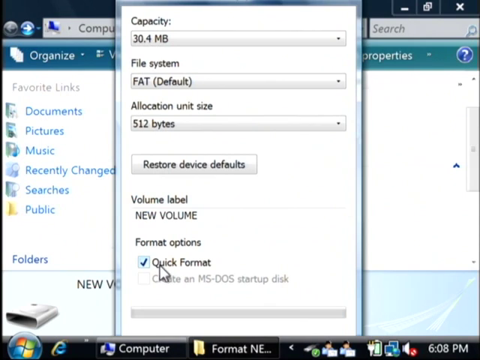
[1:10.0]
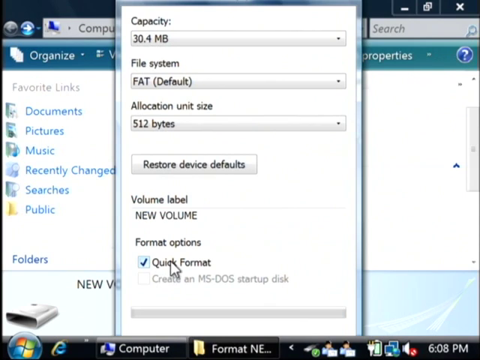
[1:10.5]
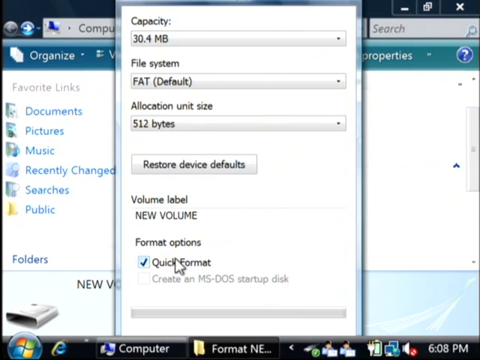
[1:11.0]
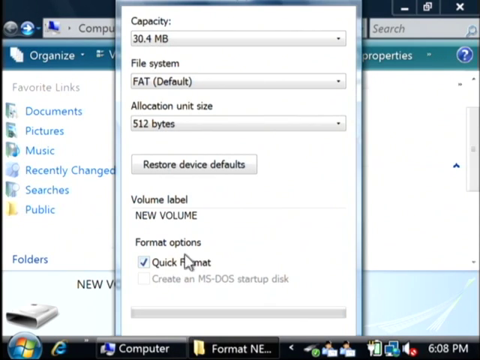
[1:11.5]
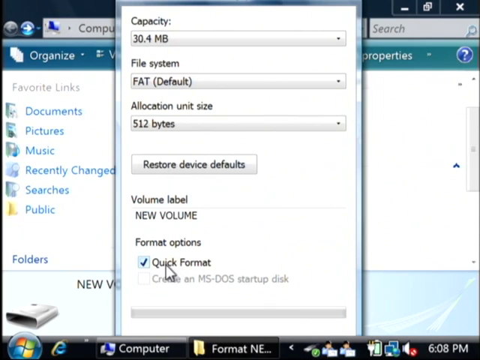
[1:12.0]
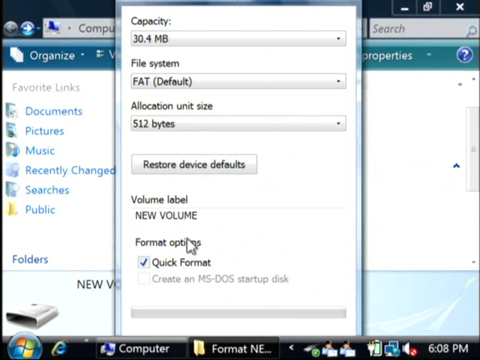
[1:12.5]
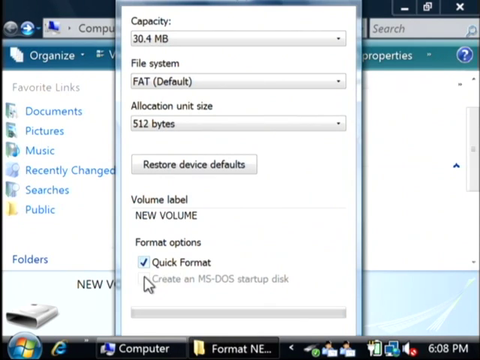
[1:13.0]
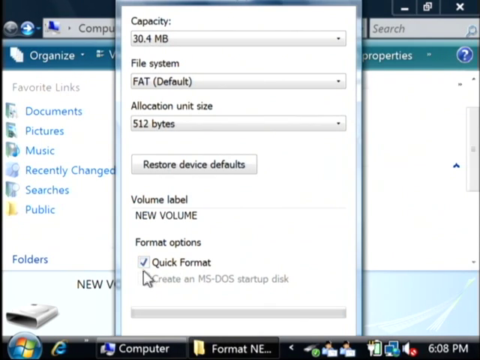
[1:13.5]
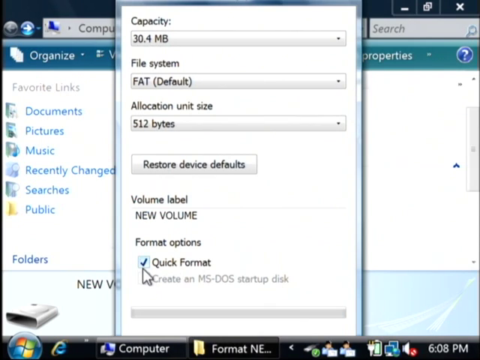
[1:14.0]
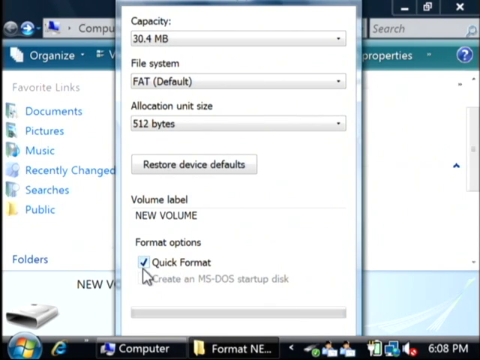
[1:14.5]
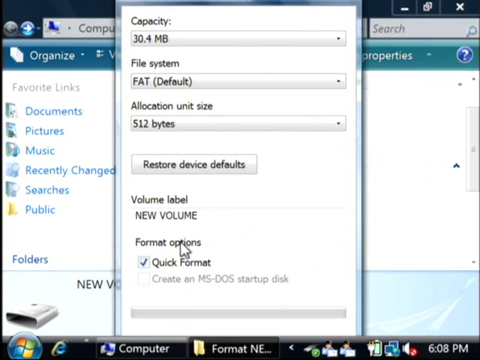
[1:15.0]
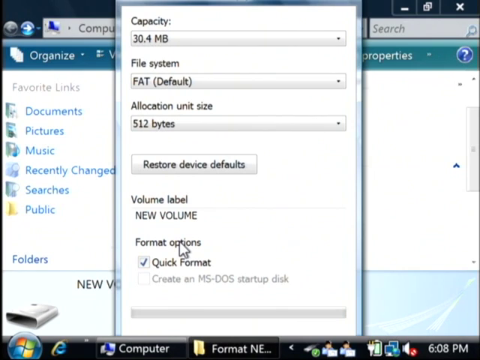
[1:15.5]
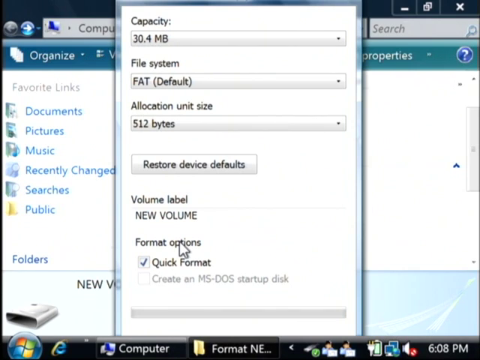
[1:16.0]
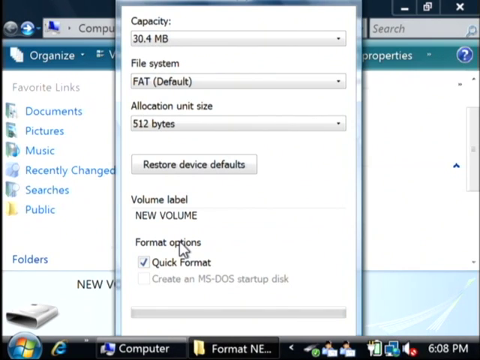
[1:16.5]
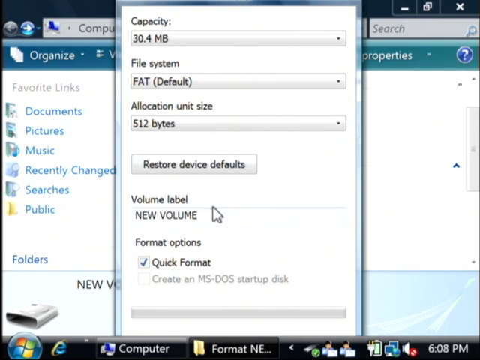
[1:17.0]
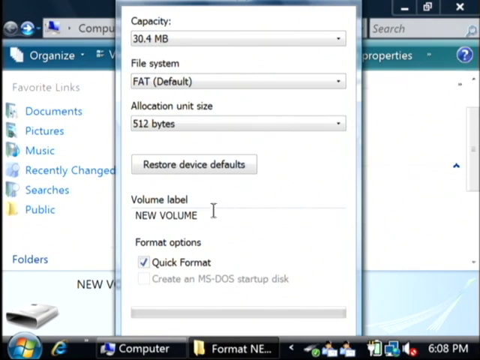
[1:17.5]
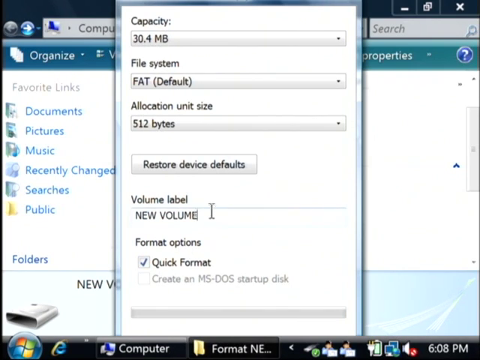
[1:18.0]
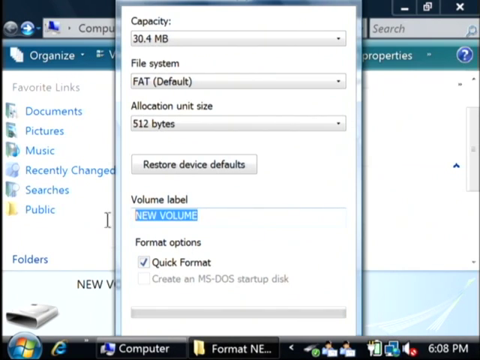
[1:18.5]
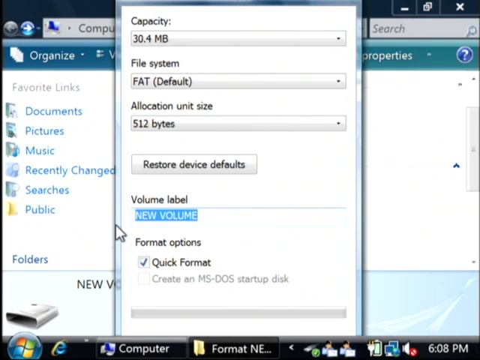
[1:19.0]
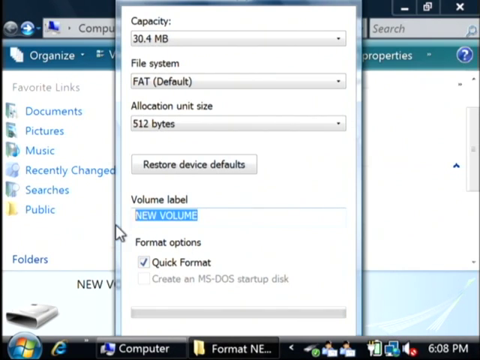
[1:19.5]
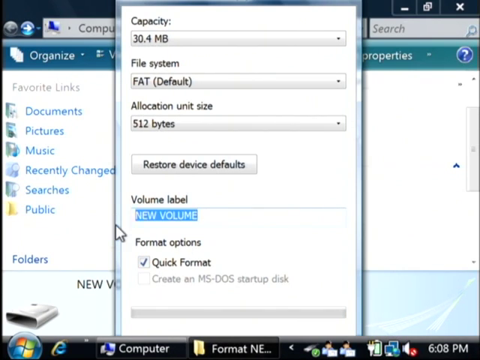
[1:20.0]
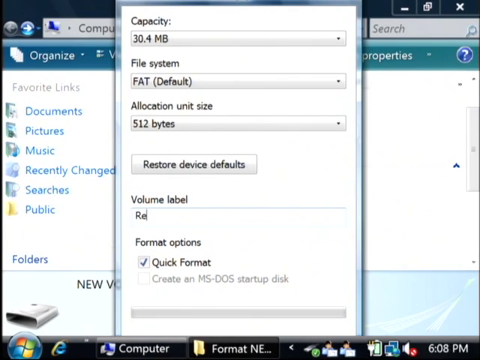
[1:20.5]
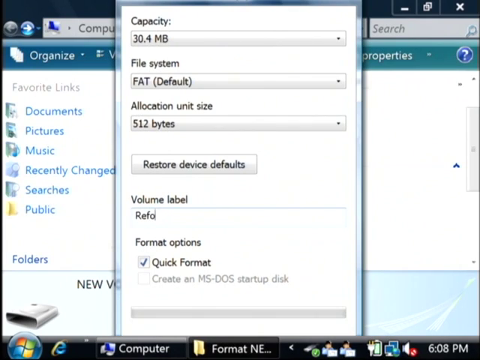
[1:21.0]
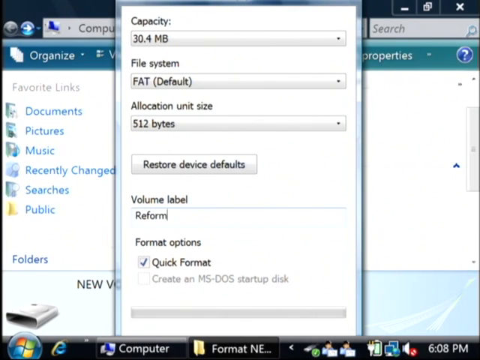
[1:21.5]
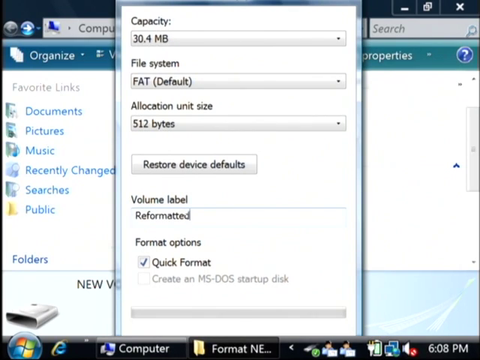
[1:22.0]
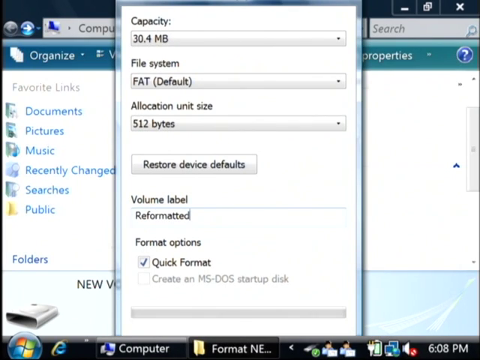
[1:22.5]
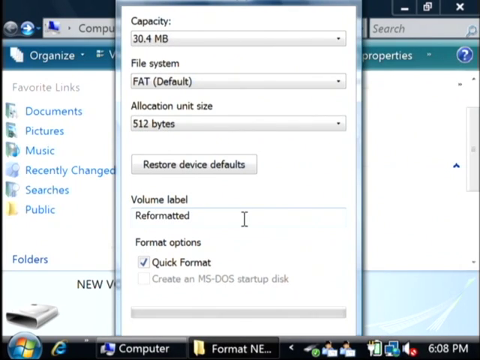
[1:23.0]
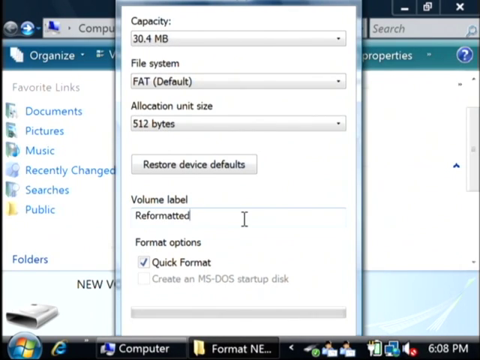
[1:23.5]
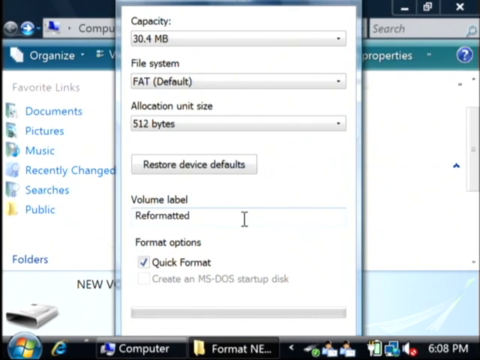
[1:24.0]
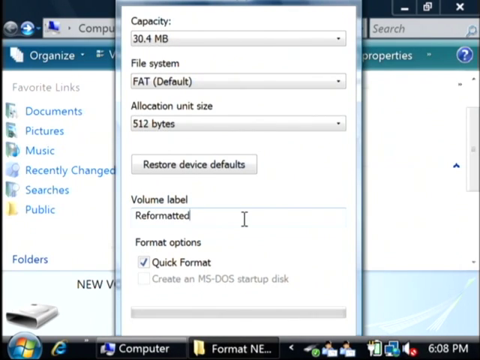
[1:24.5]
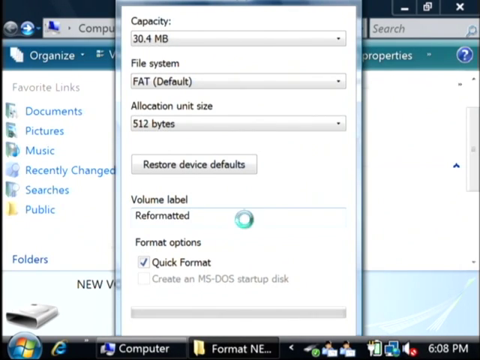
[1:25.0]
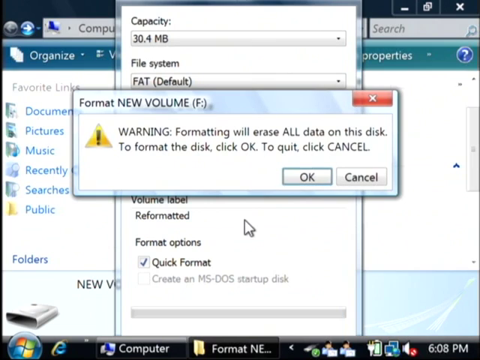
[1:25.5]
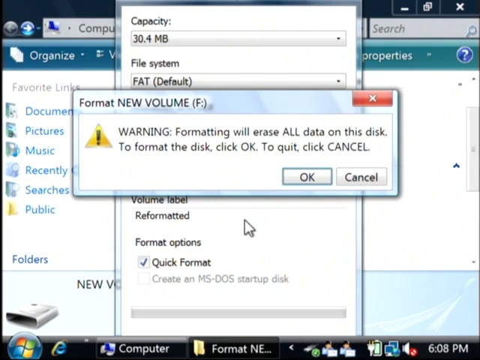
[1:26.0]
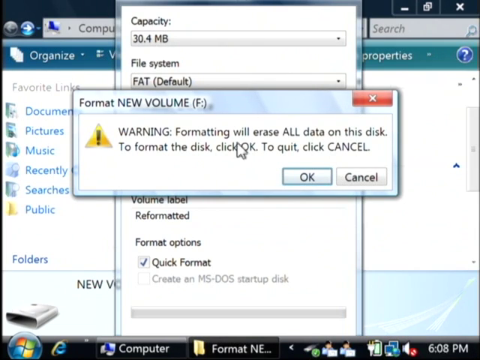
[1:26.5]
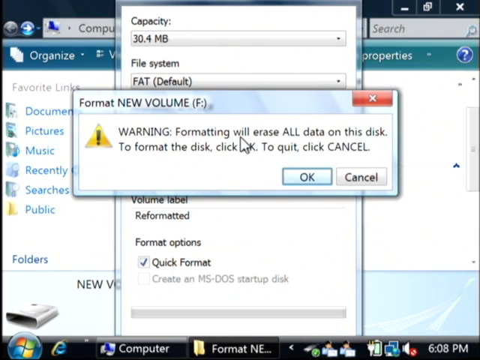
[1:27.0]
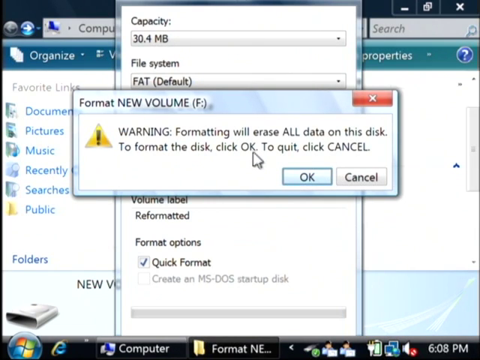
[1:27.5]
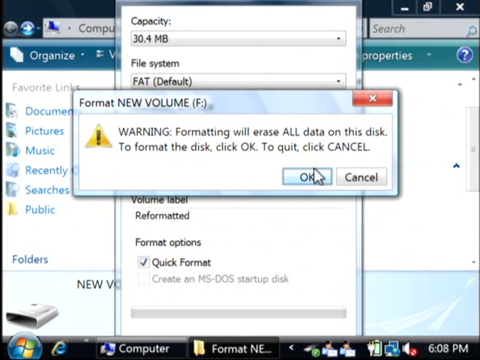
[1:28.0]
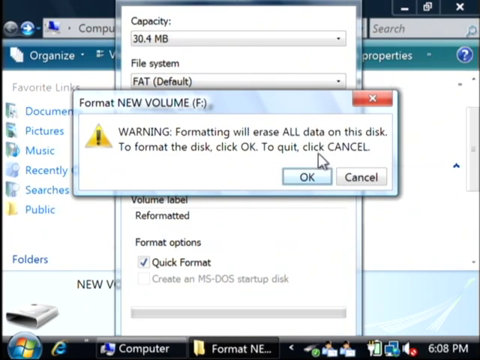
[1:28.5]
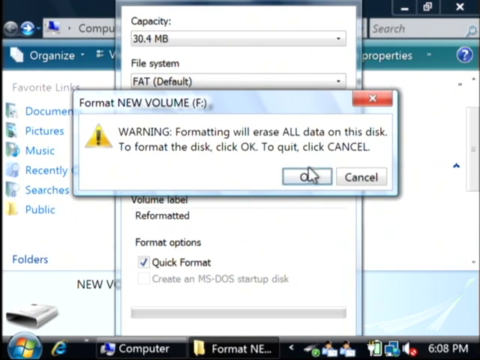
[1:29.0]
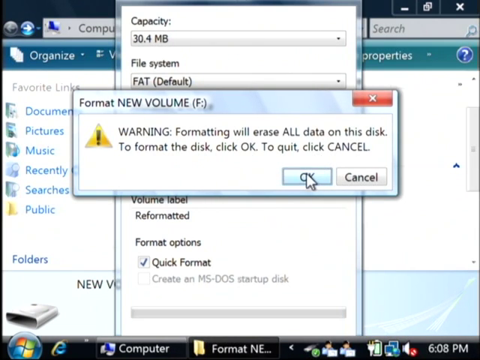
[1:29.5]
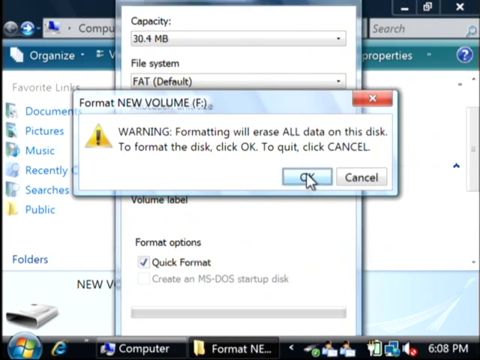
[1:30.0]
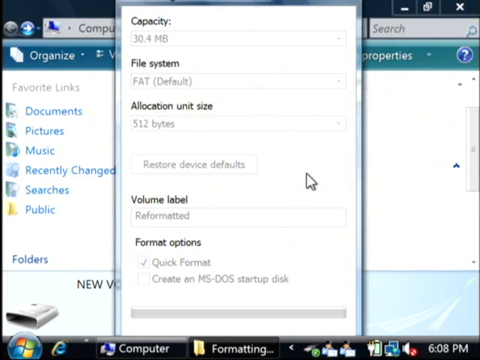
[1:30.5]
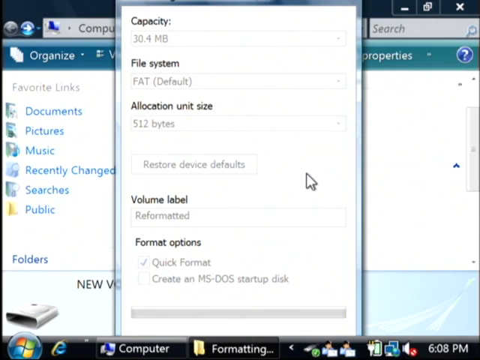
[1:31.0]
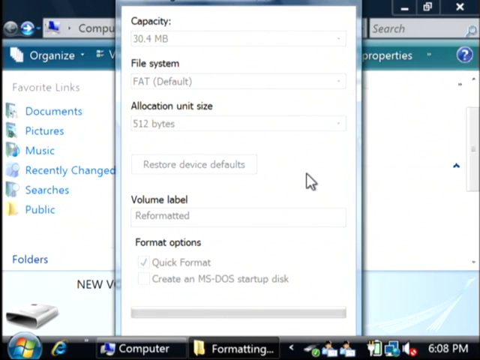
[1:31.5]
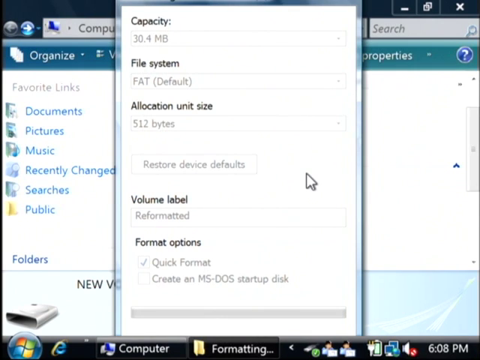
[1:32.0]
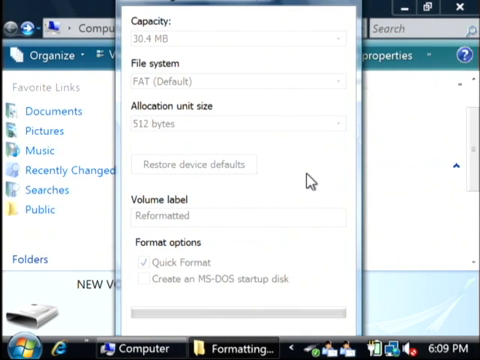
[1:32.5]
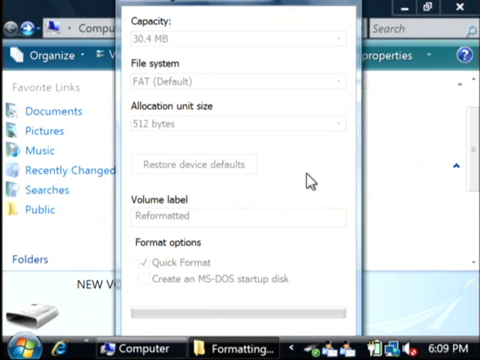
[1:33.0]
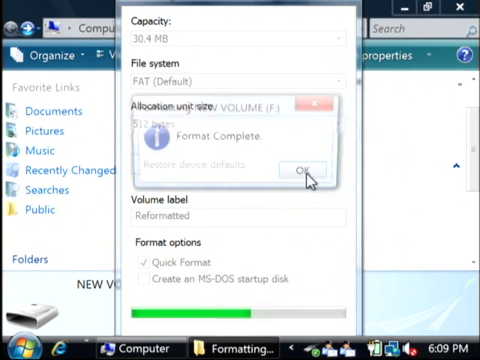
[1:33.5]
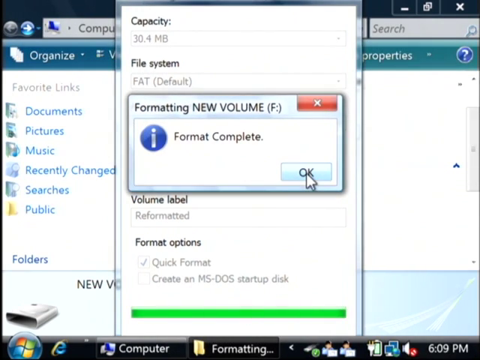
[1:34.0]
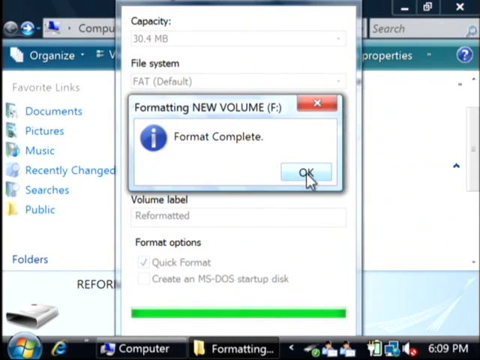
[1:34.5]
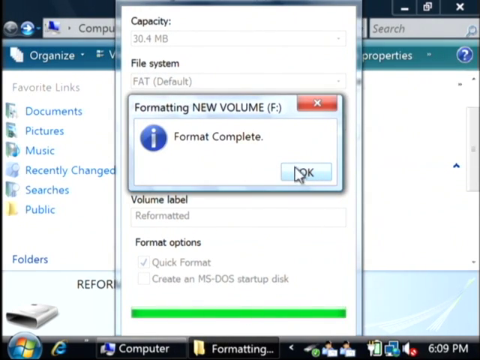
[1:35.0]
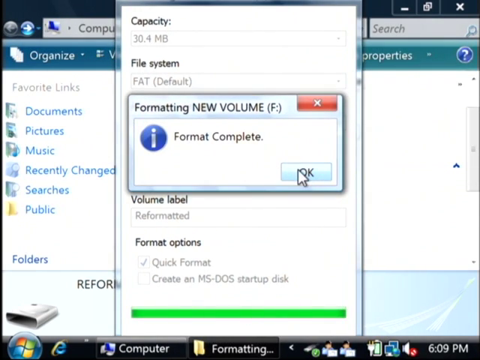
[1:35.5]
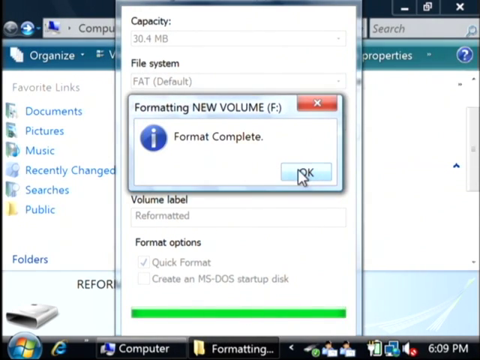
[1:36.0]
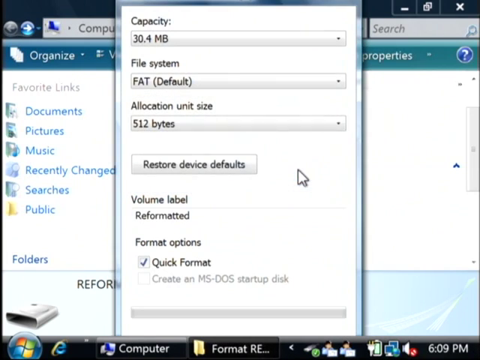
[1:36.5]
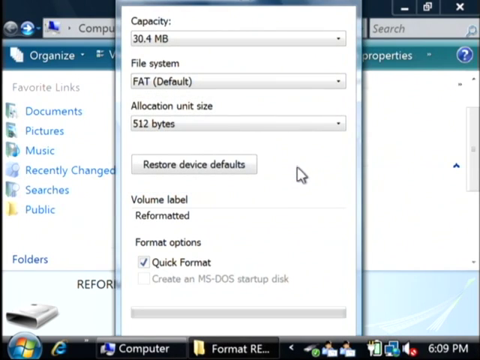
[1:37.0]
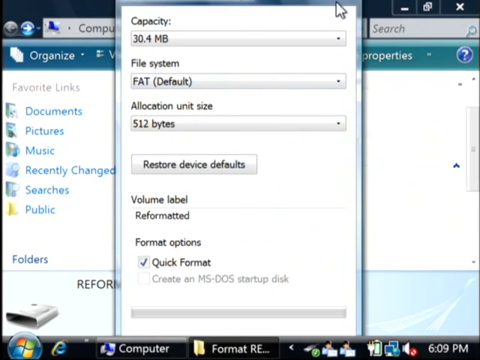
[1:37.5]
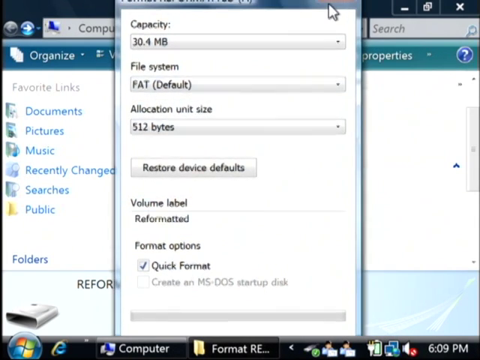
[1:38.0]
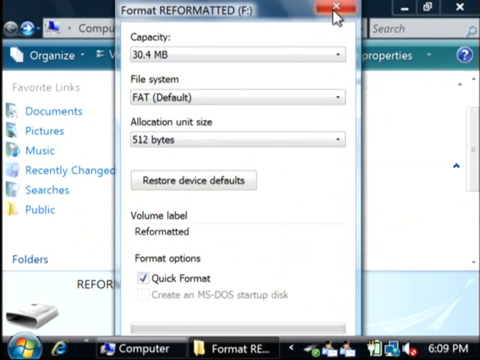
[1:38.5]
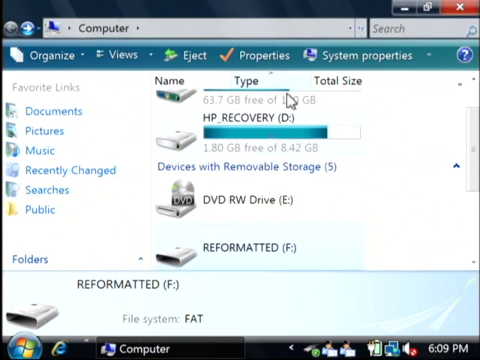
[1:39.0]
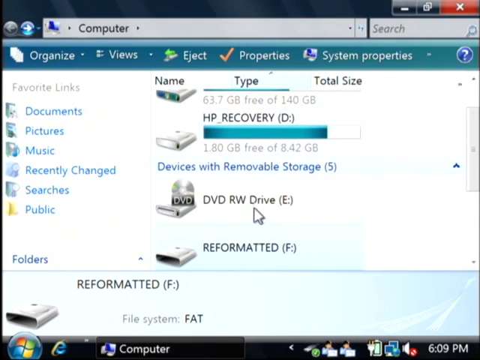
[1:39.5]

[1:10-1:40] The Quick Format box under Format Options now has a tick in it. In the volume label text field he deletes "NEW volume", types "reformatted" and presses enter. A warning window flashes up in the center, in front of all the other windows, with a yellow triangle containing an exclamation mark and text beginning "warning formatting will erase all data on this disk to format the disk click OK"; it offers only two options, OK and cancel. He hovers over it for a moment, then chooses OK. Another pop-up appears with a white letter "i" on a blue circle and the words "format complete", with OK as the only option, which he clicks. He then closes the format window.